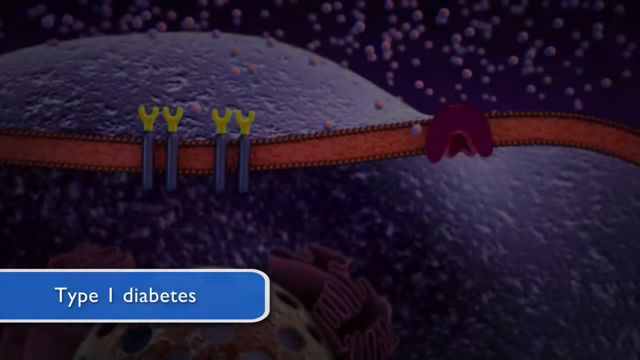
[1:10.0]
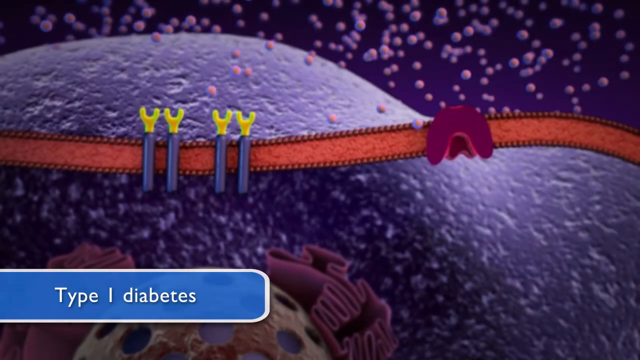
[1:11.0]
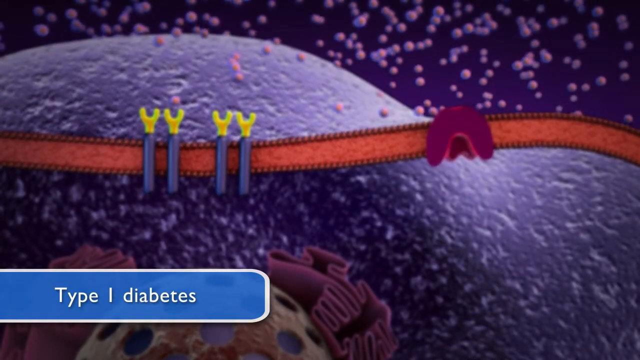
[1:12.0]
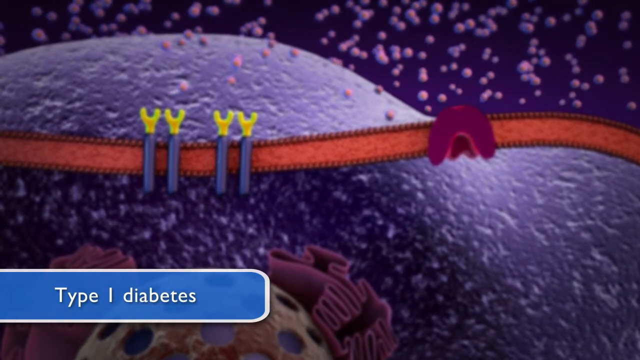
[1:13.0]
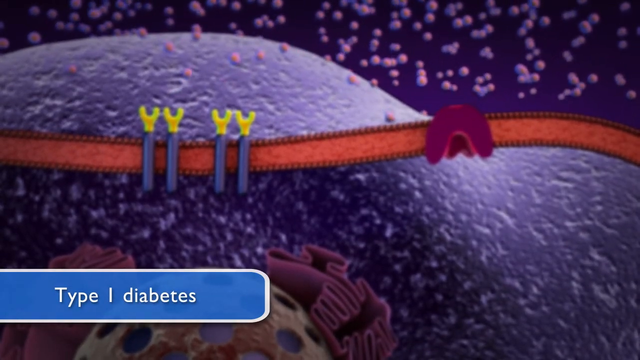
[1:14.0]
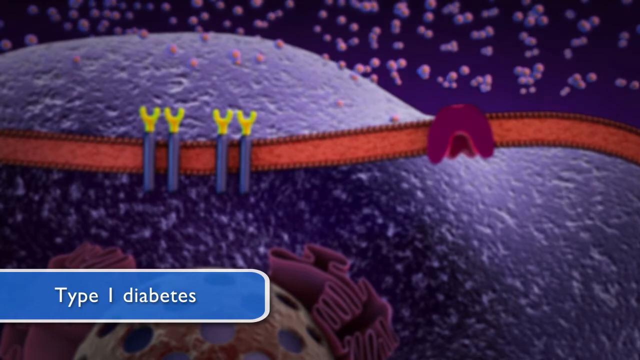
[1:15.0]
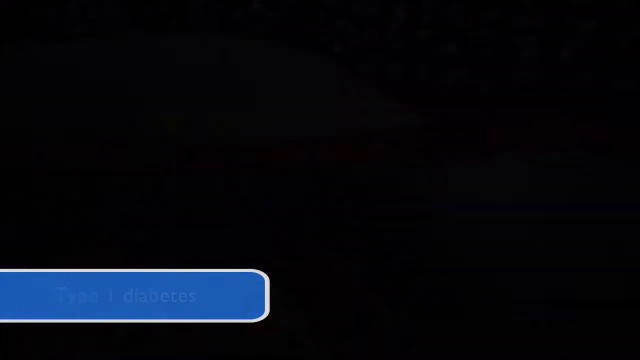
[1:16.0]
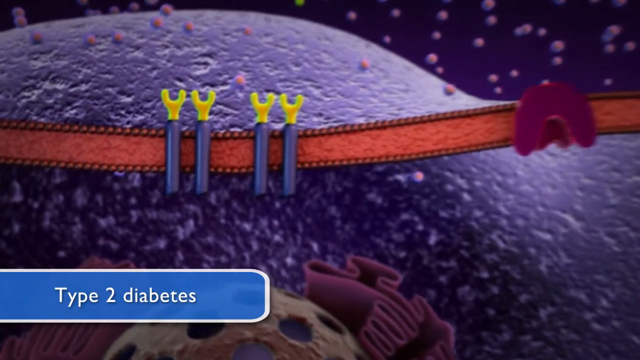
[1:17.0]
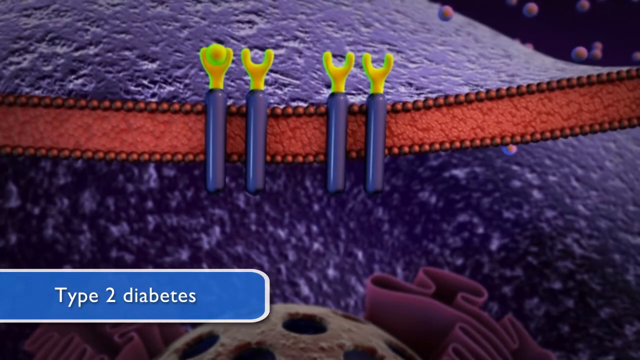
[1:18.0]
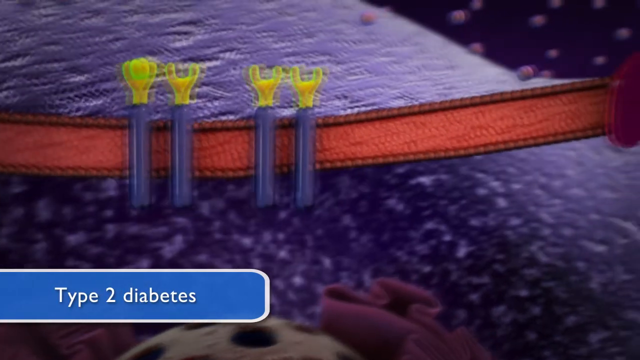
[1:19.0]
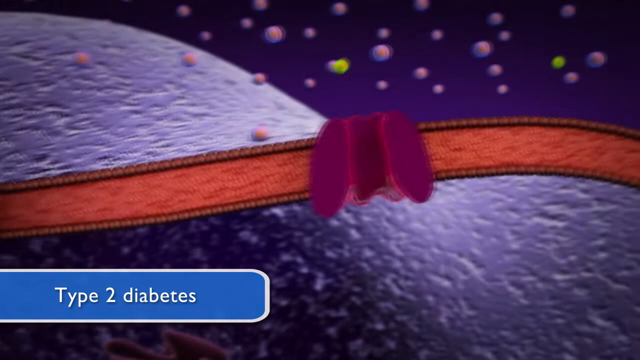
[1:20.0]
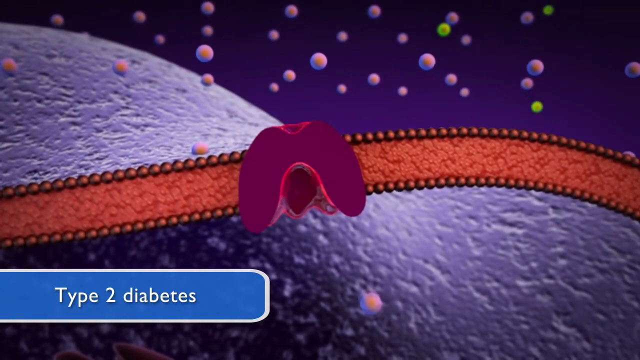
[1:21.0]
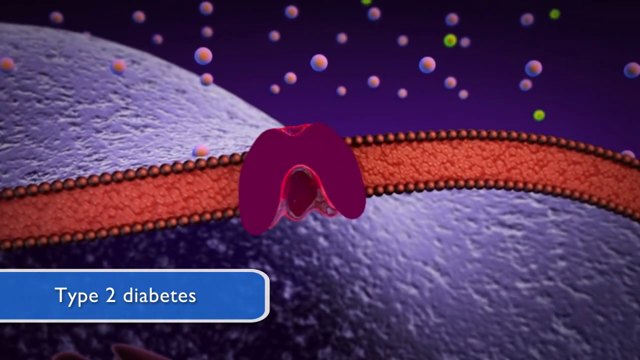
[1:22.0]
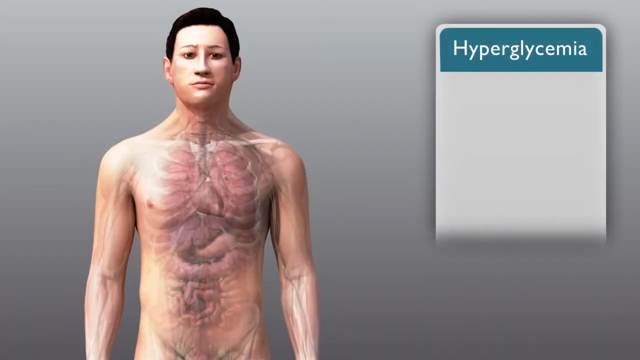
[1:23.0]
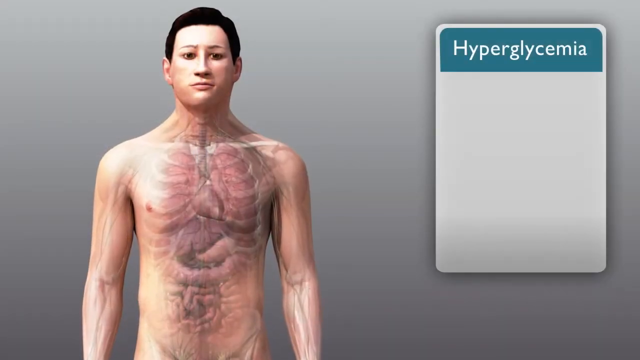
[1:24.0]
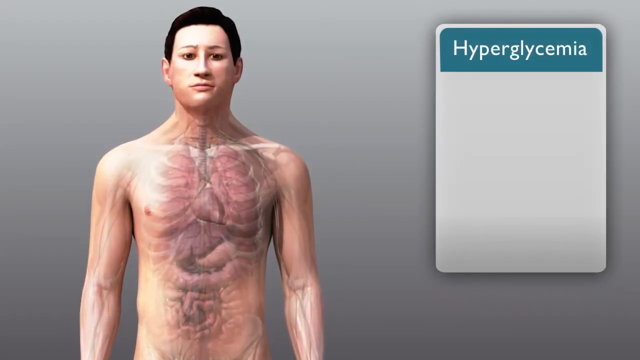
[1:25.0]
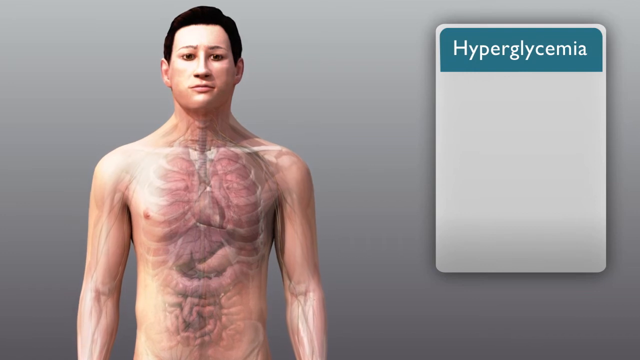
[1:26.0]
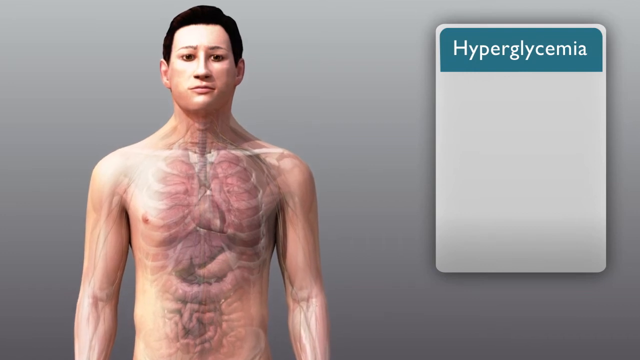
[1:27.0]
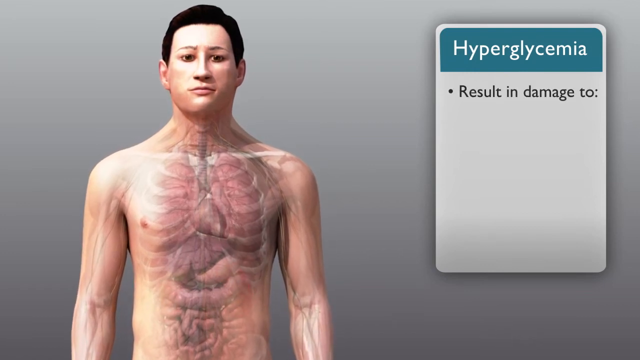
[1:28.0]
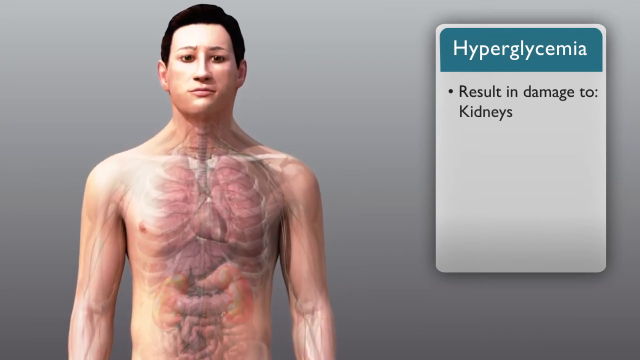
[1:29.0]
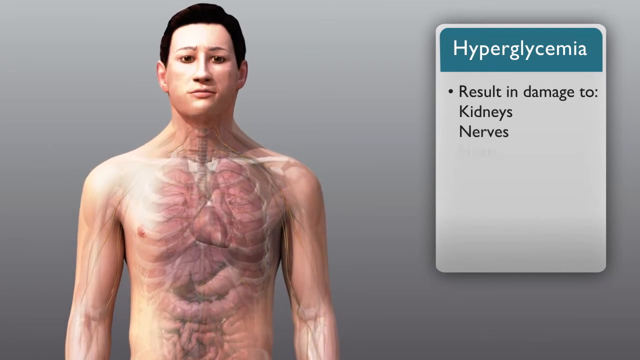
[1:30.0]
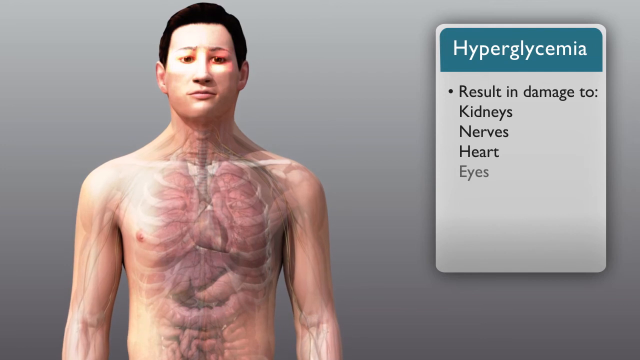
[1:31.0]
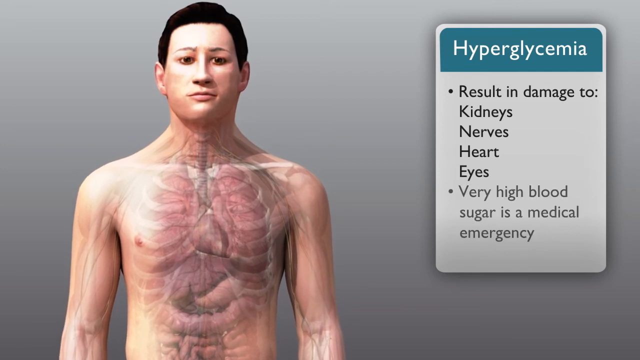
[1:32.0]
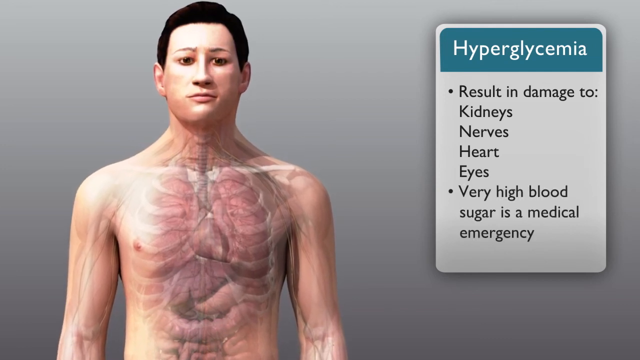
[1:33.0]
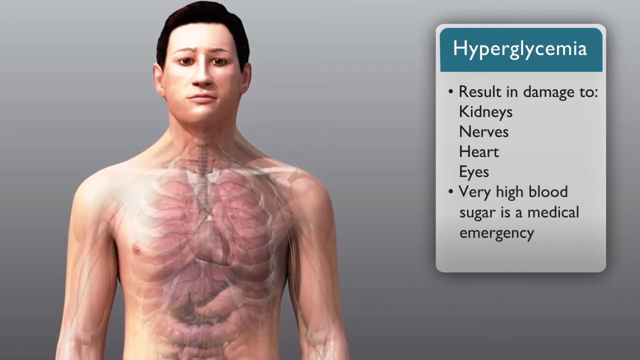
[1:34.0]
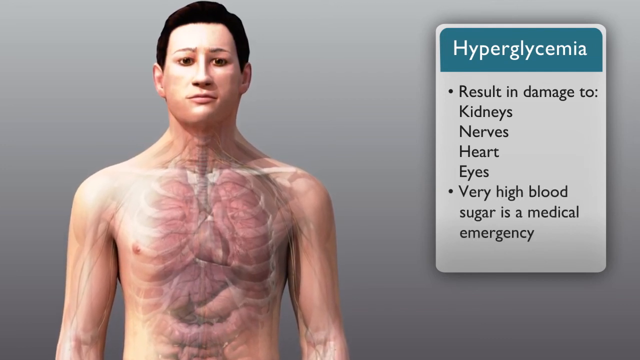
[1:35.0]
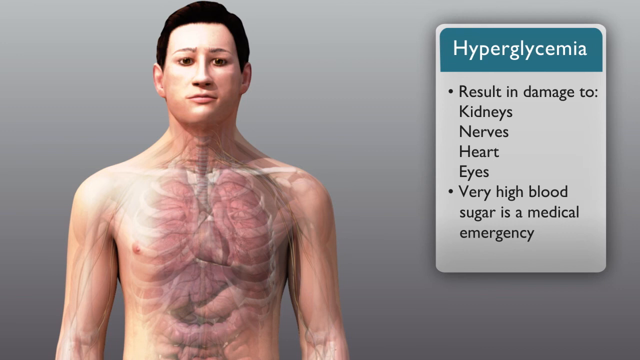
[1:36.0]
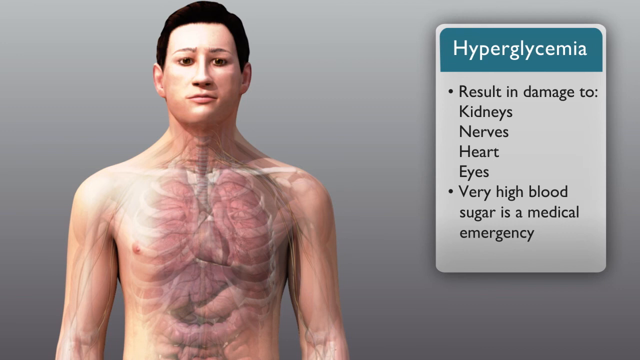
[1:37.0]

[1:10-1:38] The diagram continues, apparently showing what happens in the pancreas of a person with type 1 diabetes. Against a purple background, something that looks like a purple mountain or hill covers most of the screen. A red mottled ribbon curves from left to right across the hill, and above it many purple spheres float downwards. On the right of the ribbon is a purple blob shaped like an upside-down letter U; on the left, four blue sticks are laid vertically across the ribbon with yellow hooks on top. The camera zooms in on the four yellow hooks as a bright yellow round ball descends into the leftmost hook. The white text in the blue rectangle in the lower left-hand corner now says "type 2 diabetes". The camera then pans to the right, showing the purple blob, which now looks like two doors side by side that open to take in the purple spheres floating above. The diagram of the man from the waist up is then seen again, with part of his skeletal structure and his organs visible. Against a grey background, the diagram fills most of the left of the screen, while on the right a grey vertical rectangle appears with a green horizontal rectangle across the top containing the word "hyperglycemia" in white text. The camera gradually zooms in on the man, and black text appears in the grey box that says "resulting damage to kidneys, nerves, heart, eyes, very high blood sugar is a medical emergency".